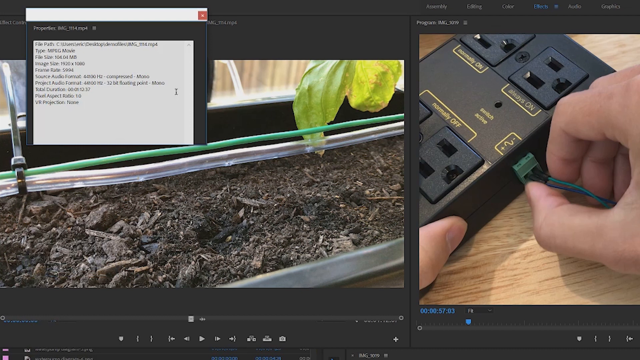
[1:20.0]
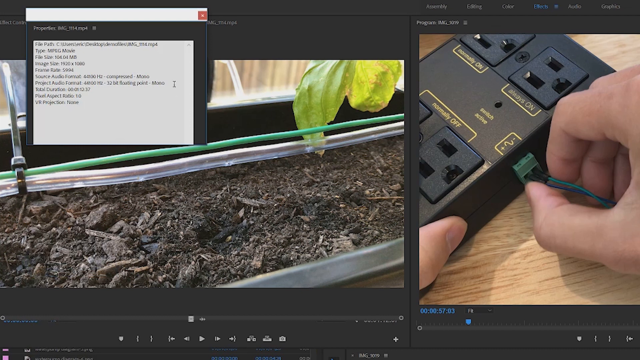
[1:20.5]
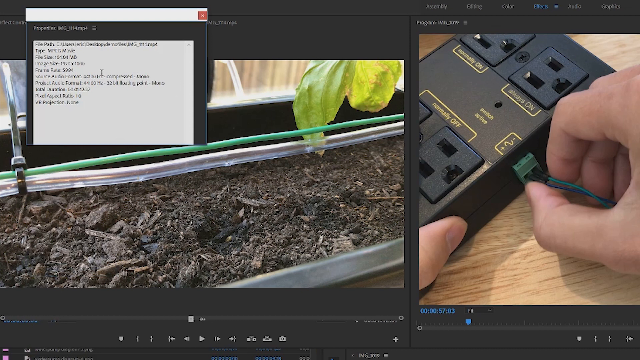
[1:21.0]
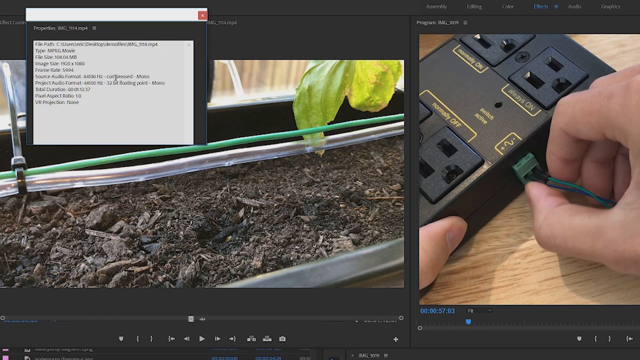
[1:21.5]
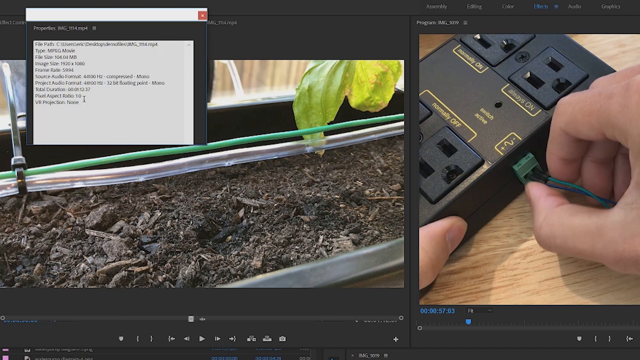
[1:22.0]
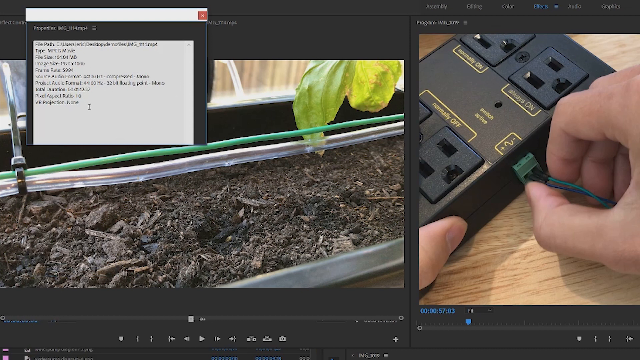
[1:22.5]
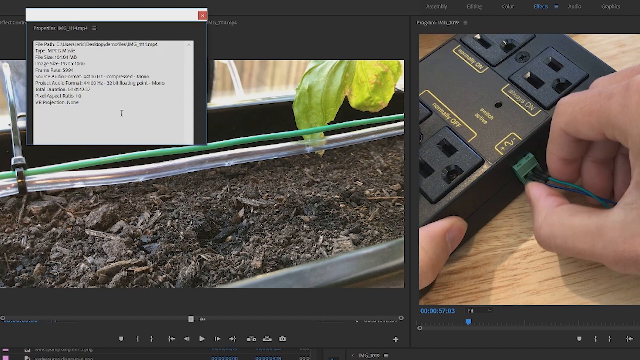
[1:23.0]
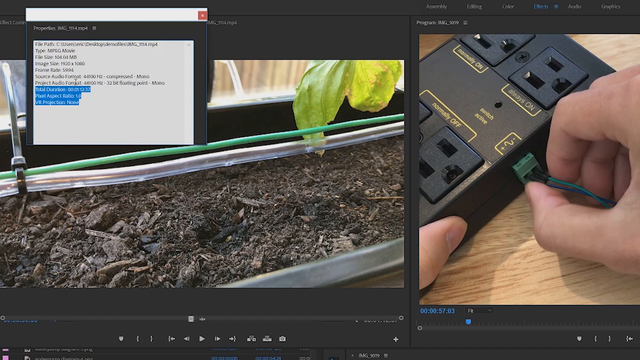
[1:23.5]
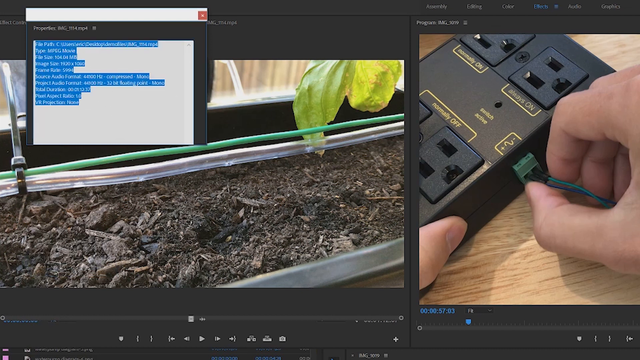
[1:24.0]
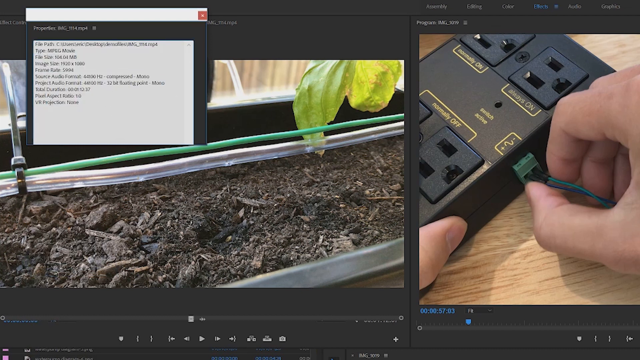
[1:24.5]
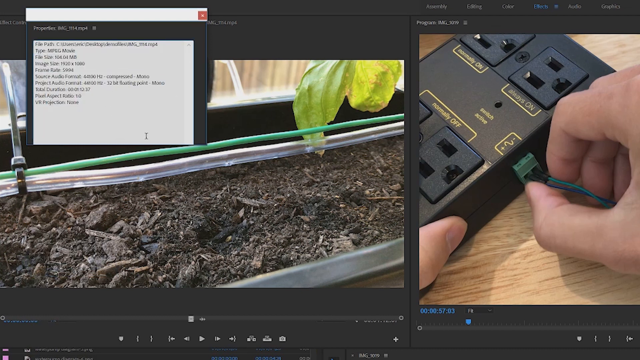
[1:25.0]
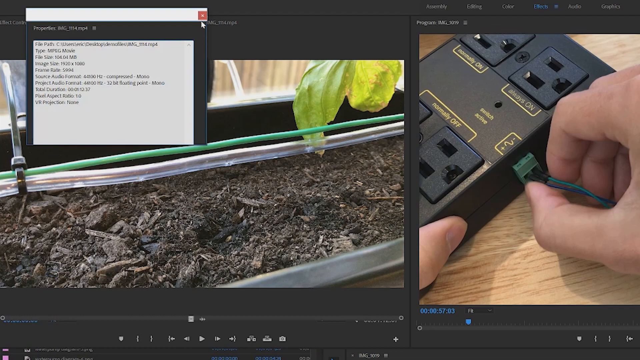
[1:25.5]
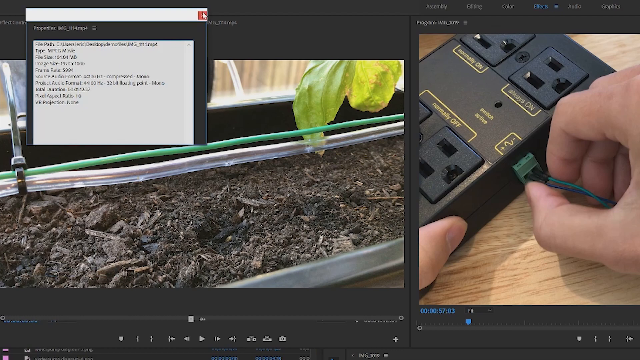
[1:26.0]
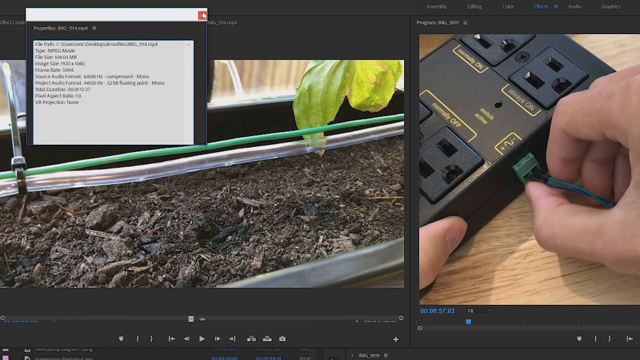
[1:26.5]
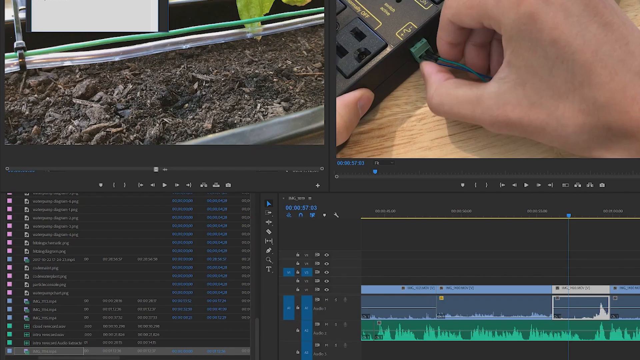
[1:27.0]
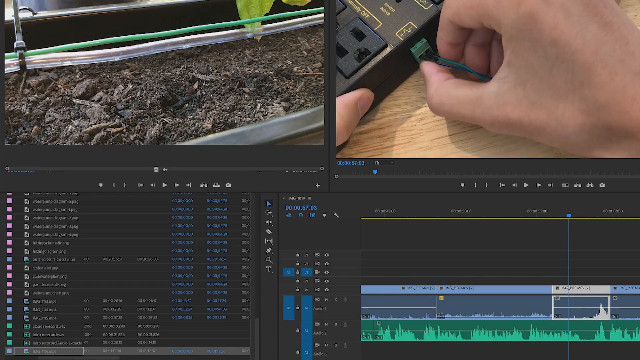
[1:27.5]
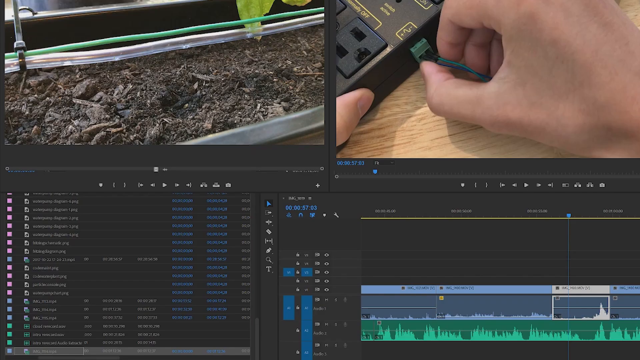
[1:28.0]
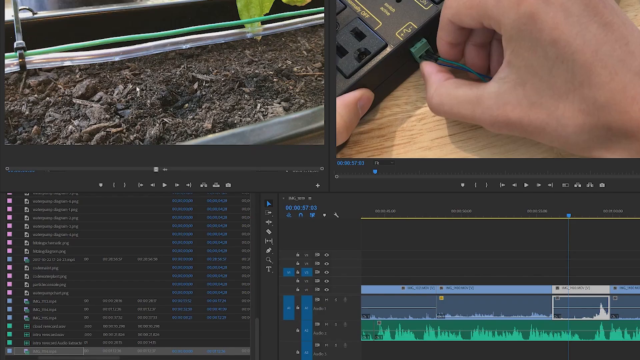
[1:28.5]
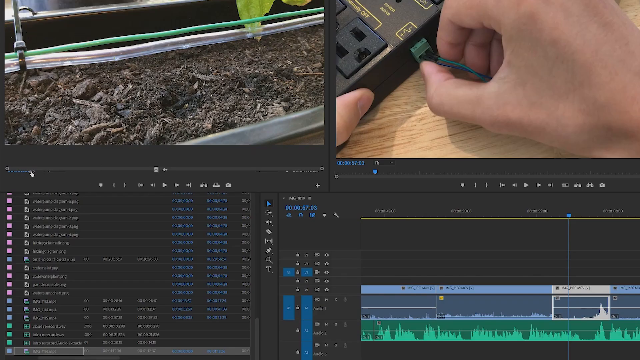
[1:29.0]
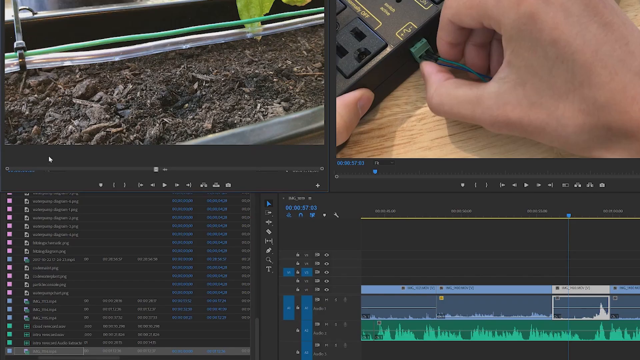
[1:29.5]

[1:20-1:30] The cursor highlights some words and copies them. The screen shows file paths, the type, "file size", "image size", "frame", "source audio", "project audio formats", "source audio formats" and "VR projection". The dark part looks like soil or compost, dark brown in color. There is a green wire and a white cable held together by another black cable, and some parts of a greenish-yellowish leaf. The white man's hand is now shown very closely, trying to put in the cable, and this time he has put it in: the pointed part is black, while the extended cable is green. The cursor highlights something and then closes that page.